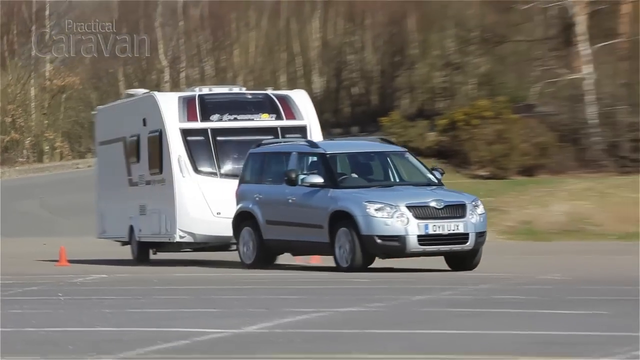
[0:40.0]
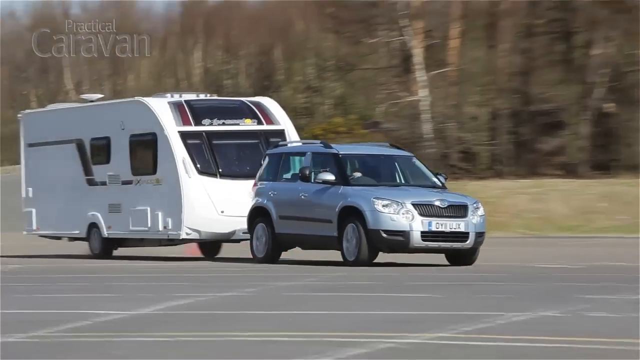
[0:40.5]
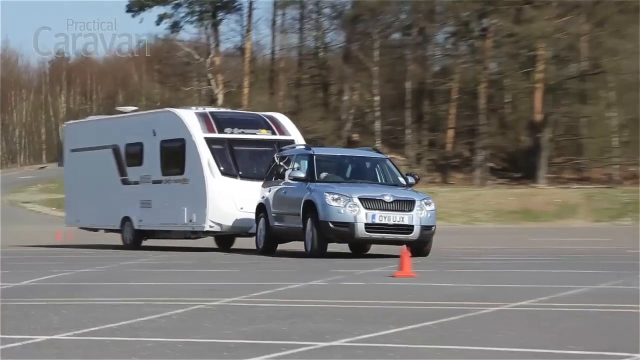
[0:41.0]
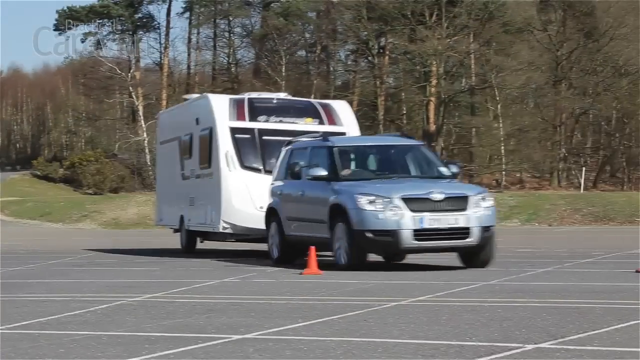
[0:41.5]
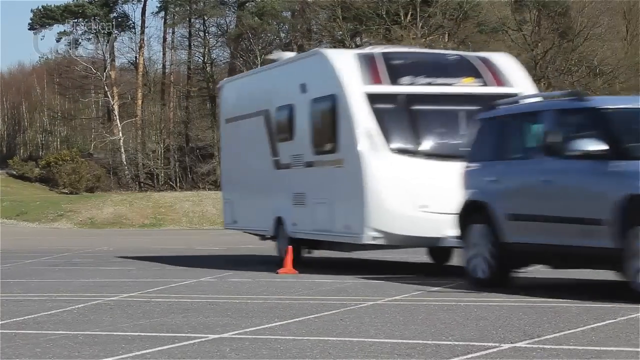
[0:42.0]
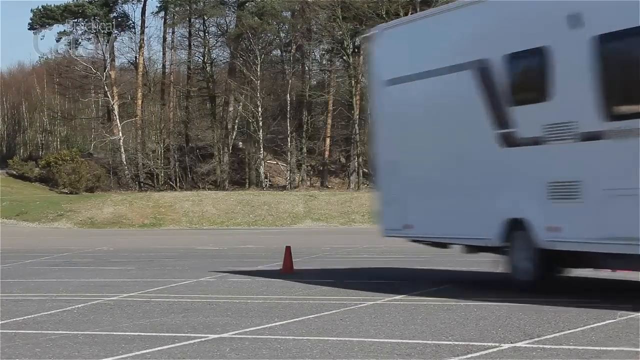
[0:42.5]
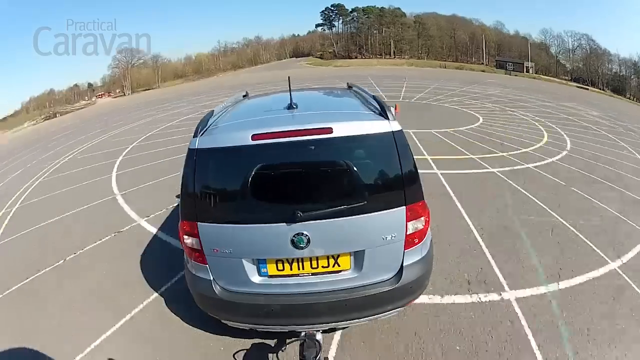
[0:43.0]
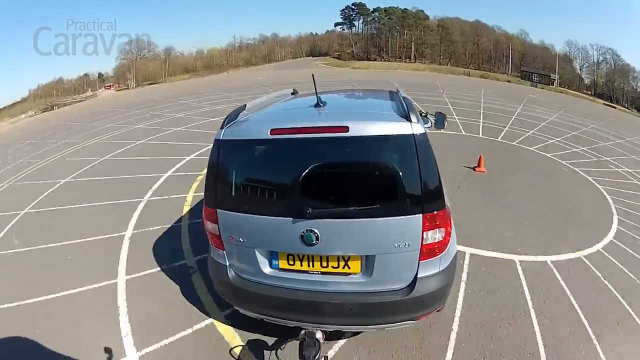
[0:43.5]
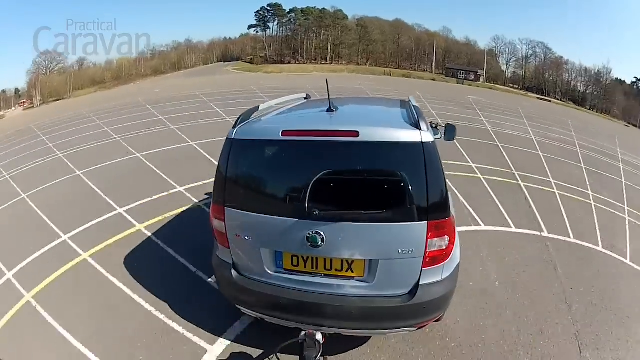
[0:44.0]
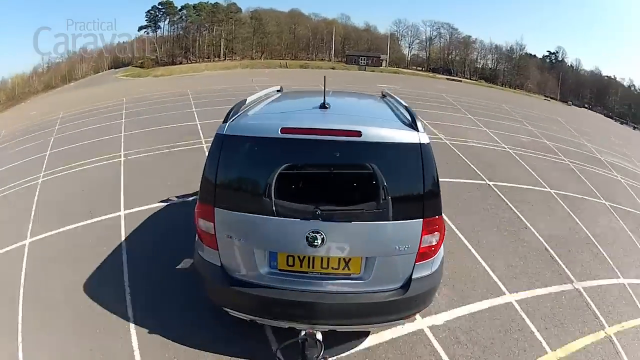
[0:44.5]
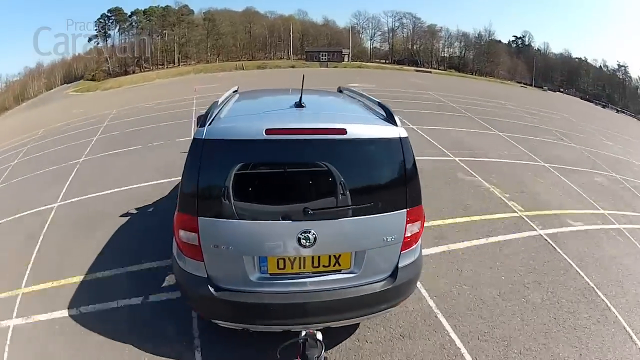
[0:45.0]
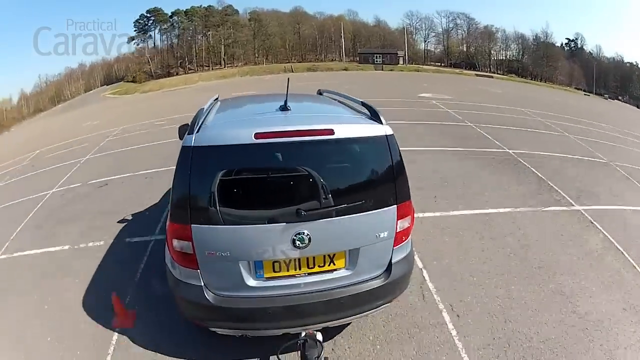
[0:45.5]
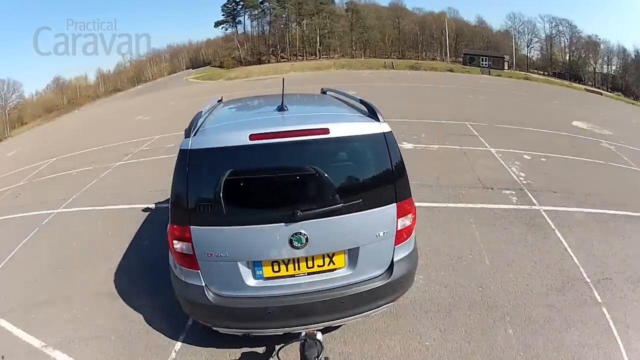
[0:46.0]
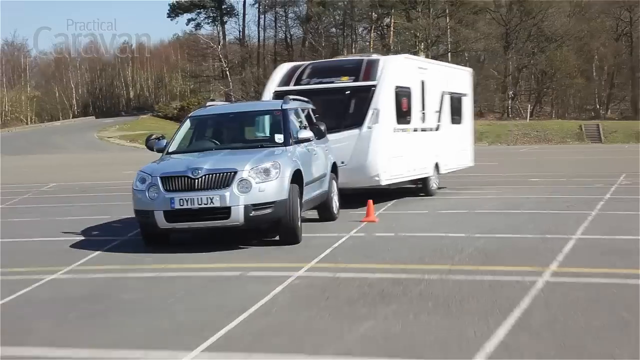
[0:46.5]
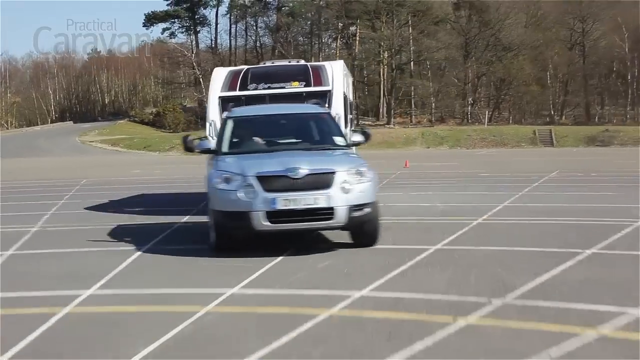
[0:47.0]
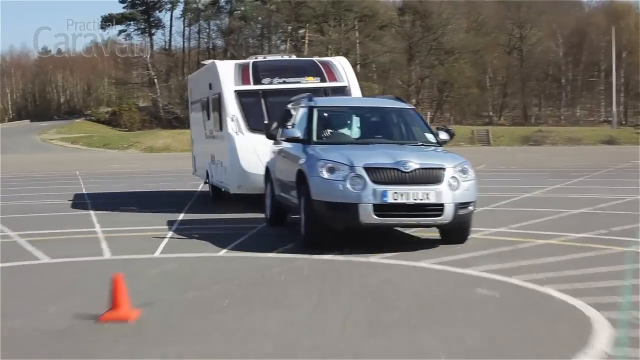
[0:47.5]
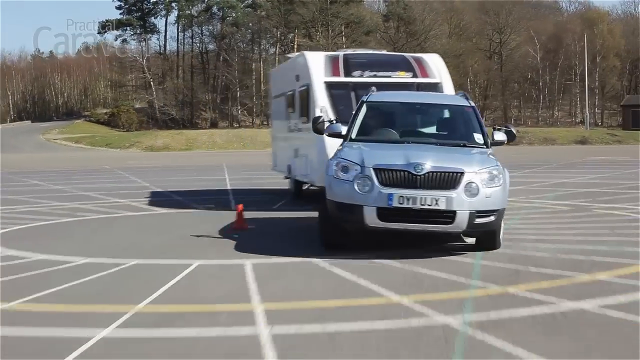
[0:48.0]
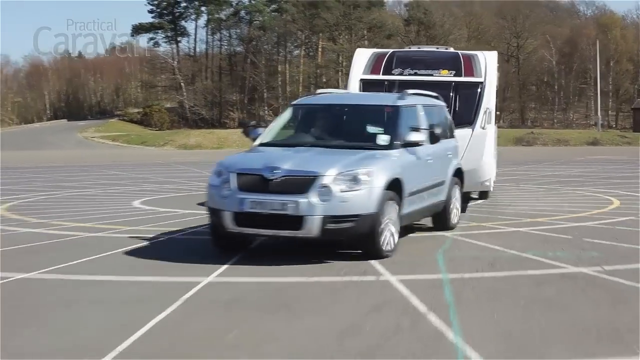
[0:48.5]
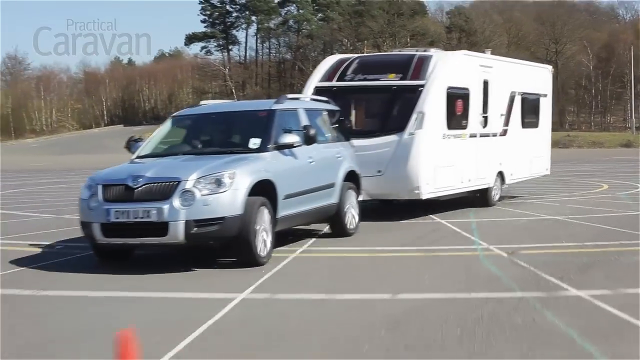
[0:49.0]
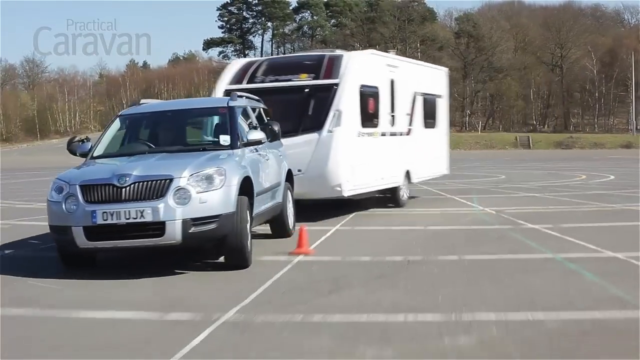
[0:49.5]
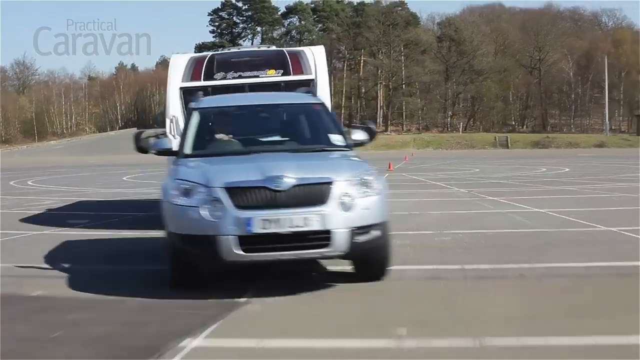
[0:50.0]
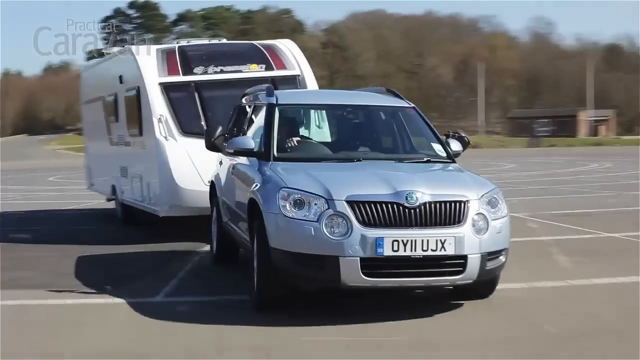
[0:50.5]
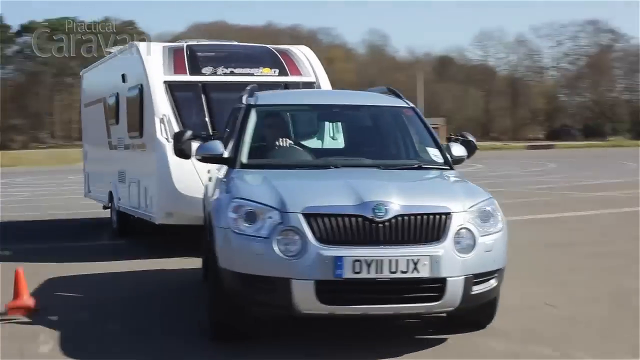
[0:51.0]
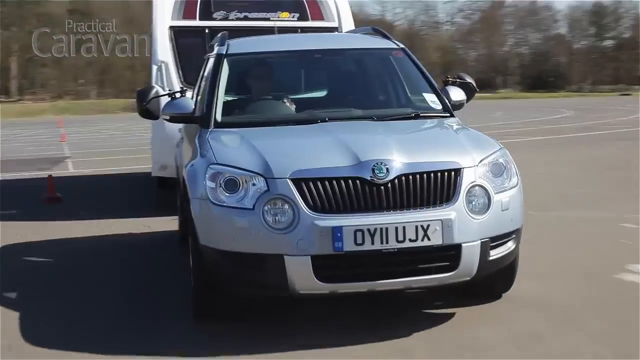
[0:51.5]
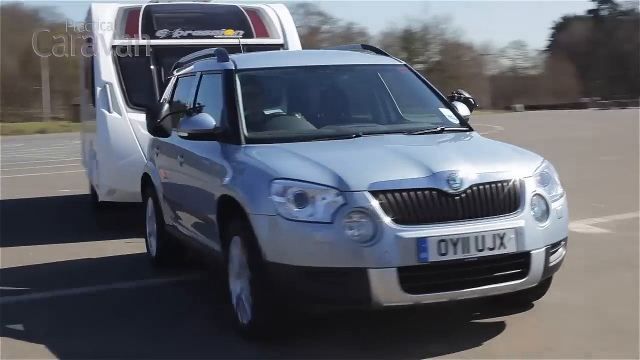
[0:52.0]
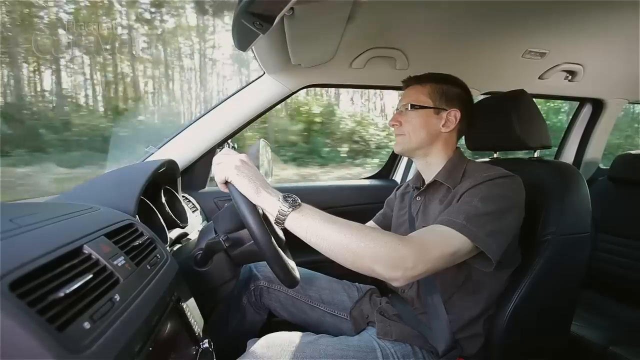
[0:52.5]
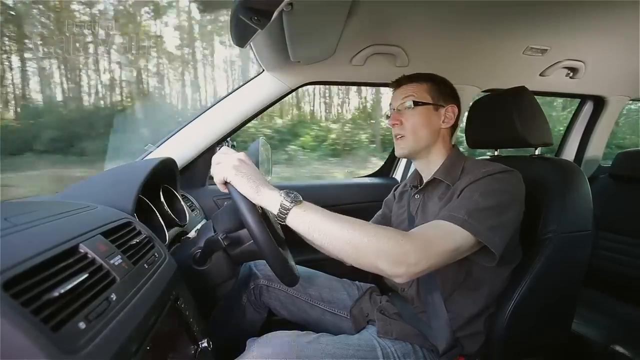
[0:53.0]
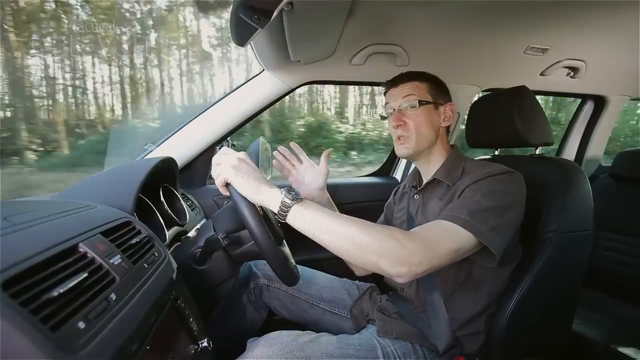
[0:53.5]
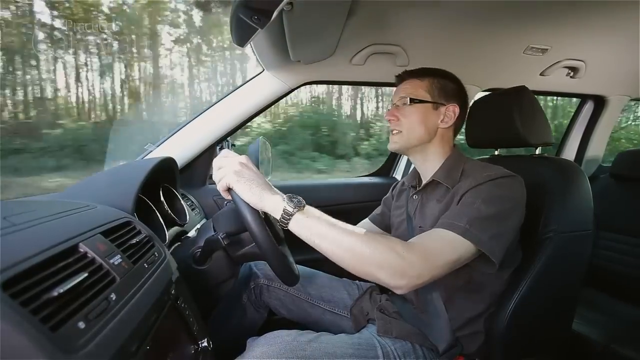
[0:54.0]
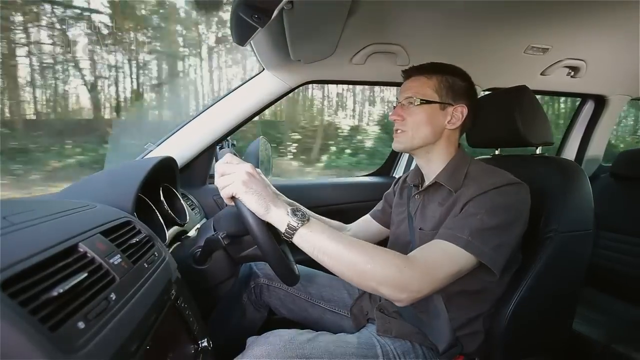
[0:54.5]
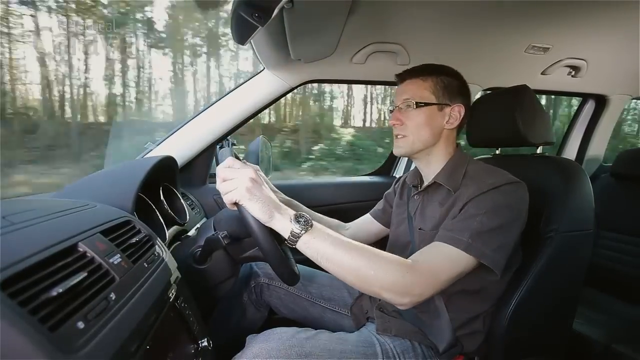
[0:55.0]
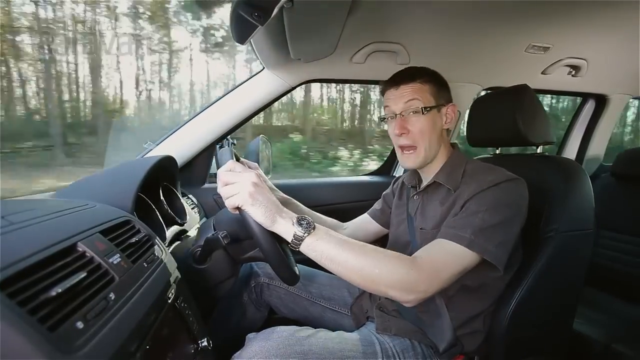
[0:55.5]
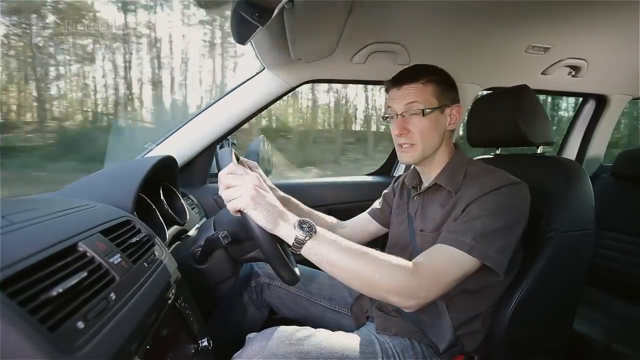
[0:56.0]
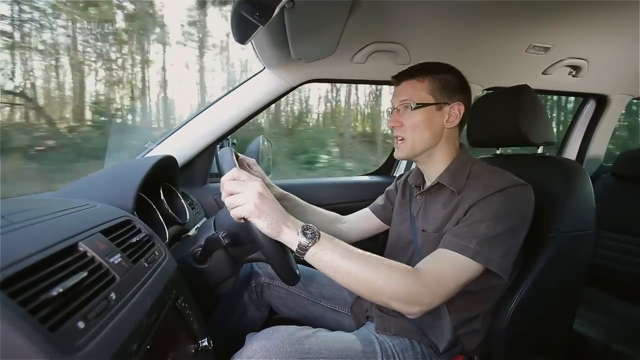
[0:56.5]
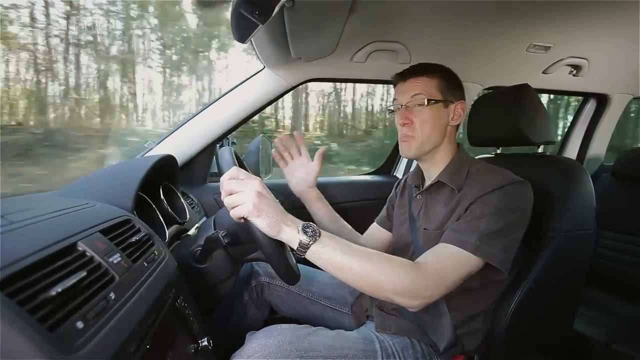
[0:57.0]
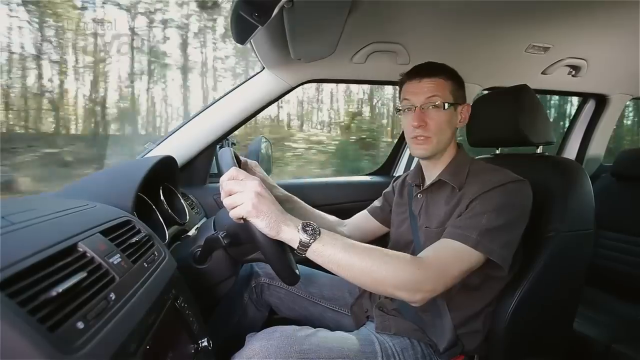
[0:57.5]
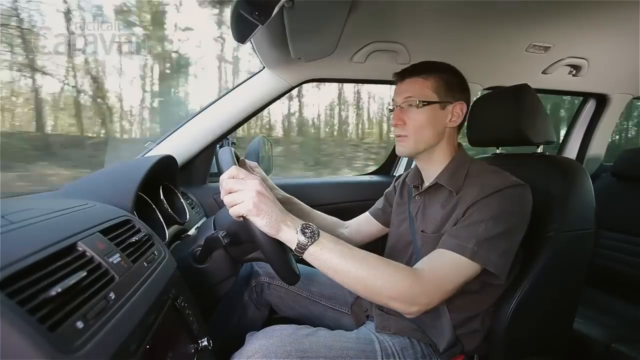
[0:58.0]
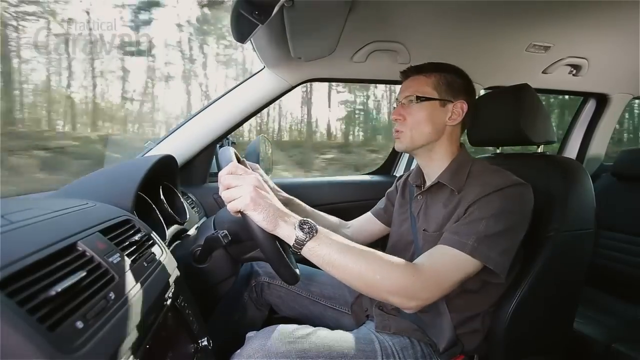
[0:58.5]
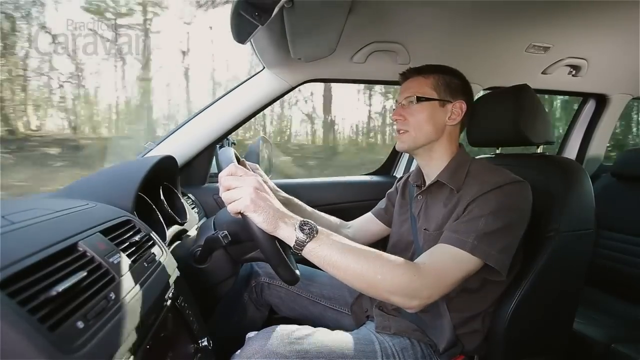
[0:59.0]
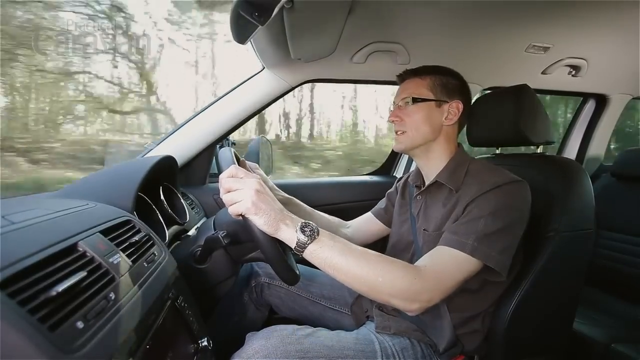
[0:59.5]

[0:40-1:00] The silver SUV is connected to a white trailer that has two wheels, one on each side. The car drives through what looks like an empty parking lot, weaving through orange cones. A kind of fisheye view from behind shows it turning from right to left to right, and then the view returns to the front as it turns deftly around the cones, the trailer turning with the car as it trails behind. Next, the man from earlier, in the brown shirt and glasses, is driving the car, whose steering wheel is on the right side. The camera is on his side view; he turns to the camera and talks. He is very relaxed, with both hands on the wheel, except that he sometimes takes a hand off the wheel to emphasize a point.